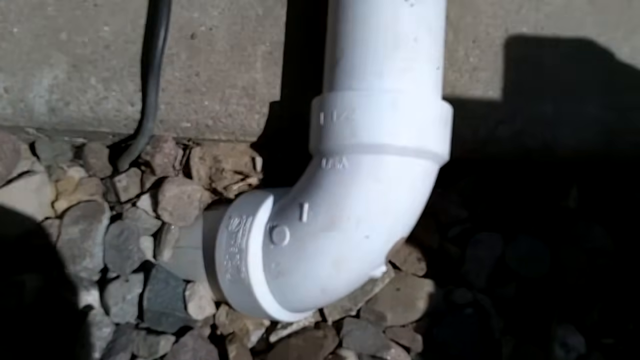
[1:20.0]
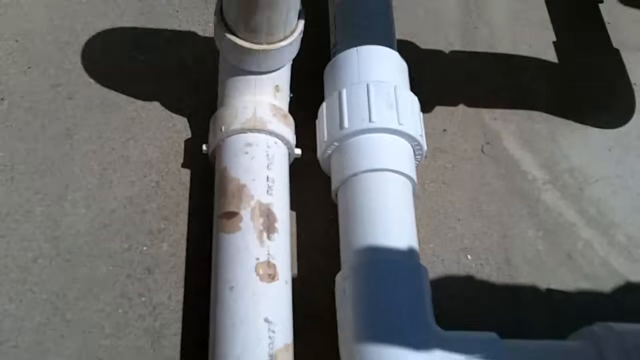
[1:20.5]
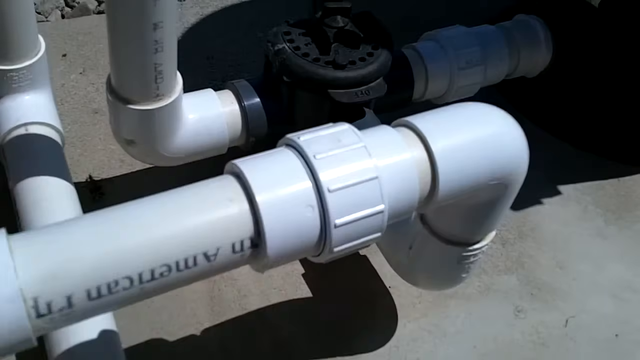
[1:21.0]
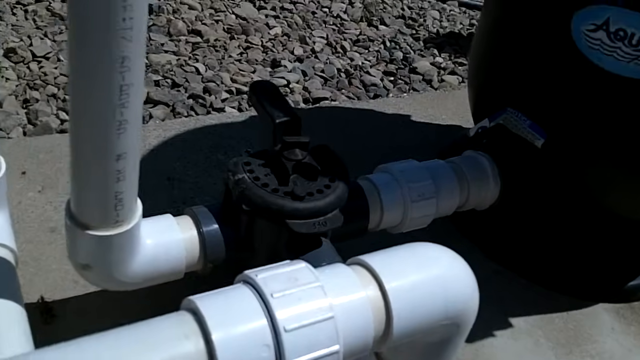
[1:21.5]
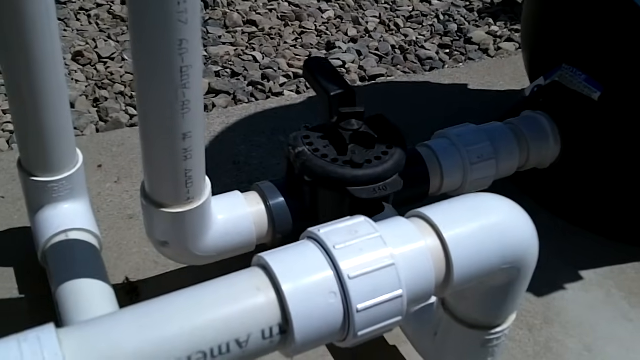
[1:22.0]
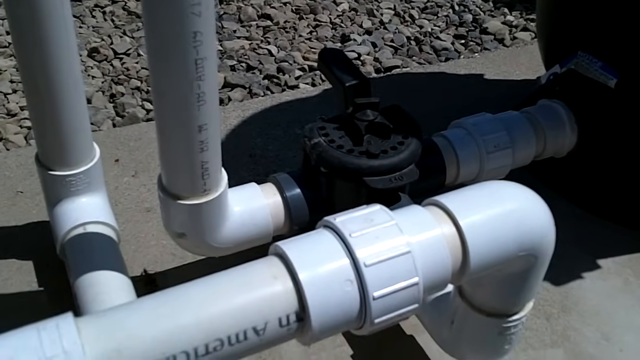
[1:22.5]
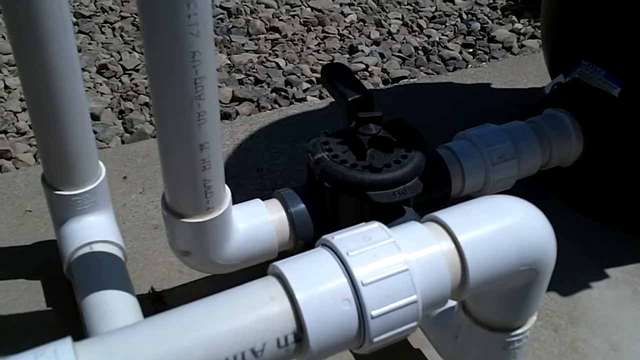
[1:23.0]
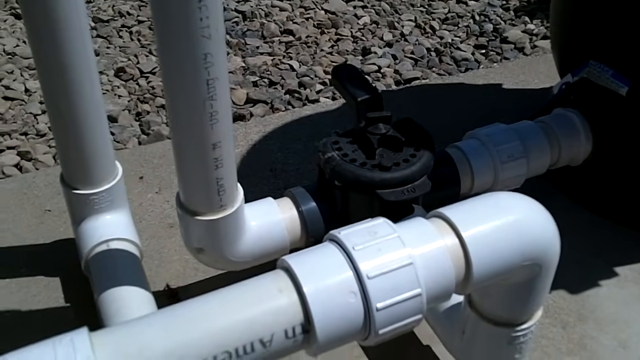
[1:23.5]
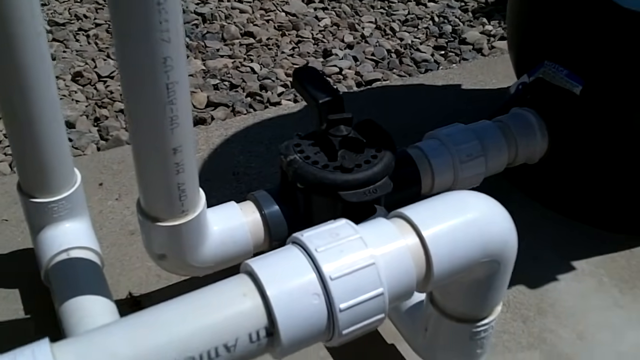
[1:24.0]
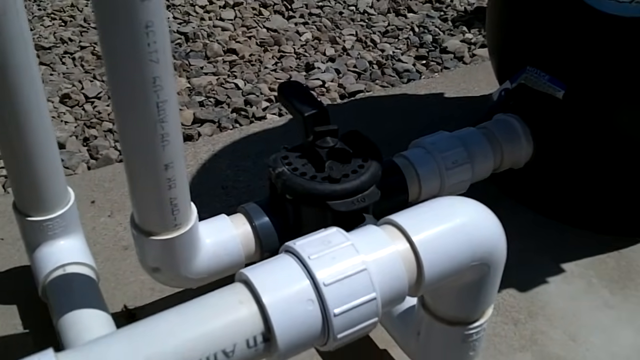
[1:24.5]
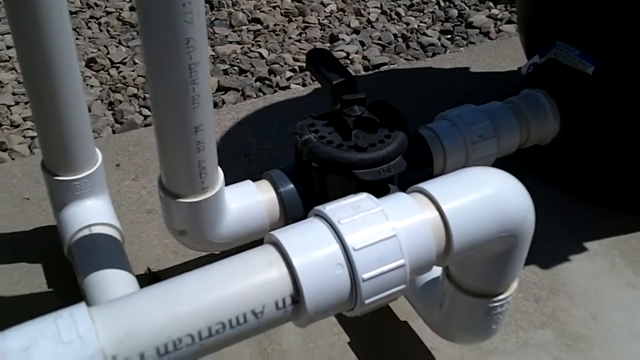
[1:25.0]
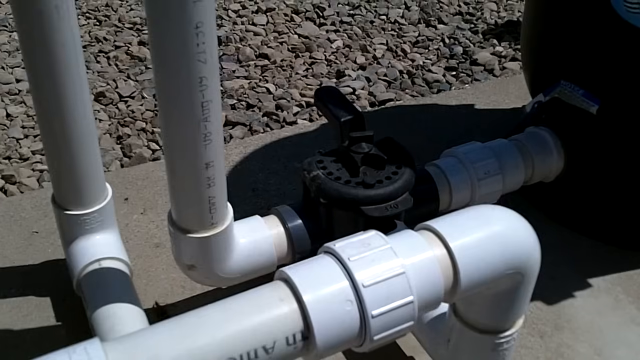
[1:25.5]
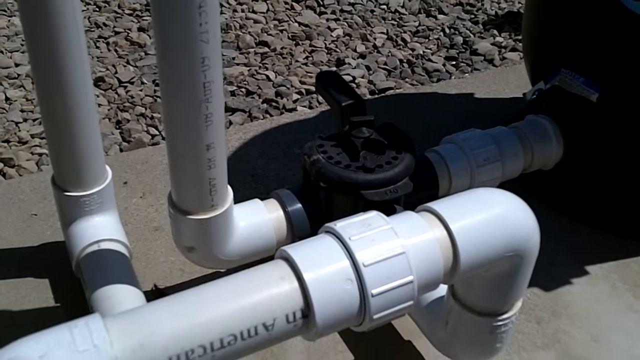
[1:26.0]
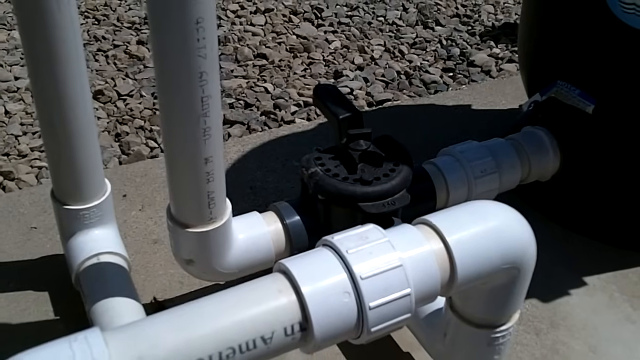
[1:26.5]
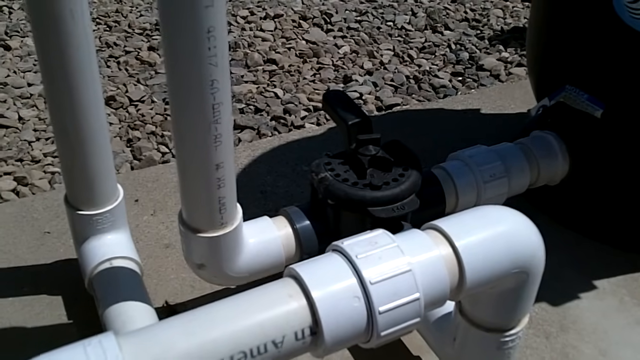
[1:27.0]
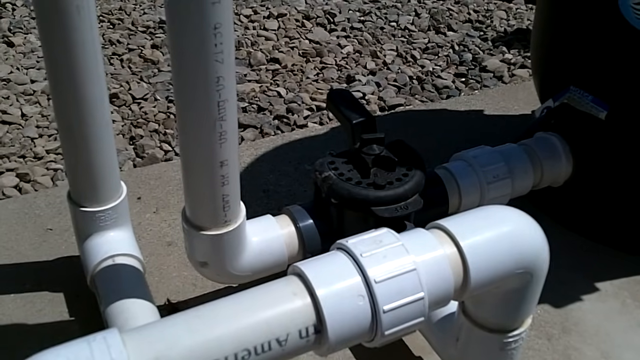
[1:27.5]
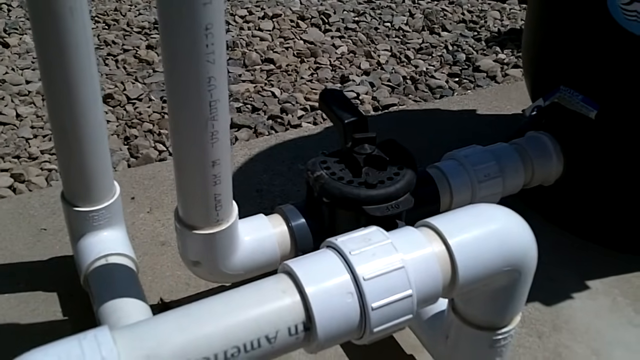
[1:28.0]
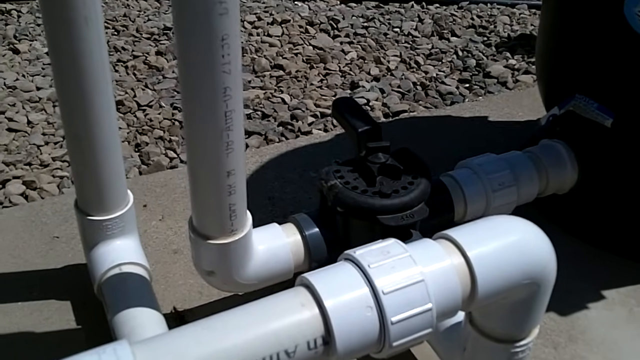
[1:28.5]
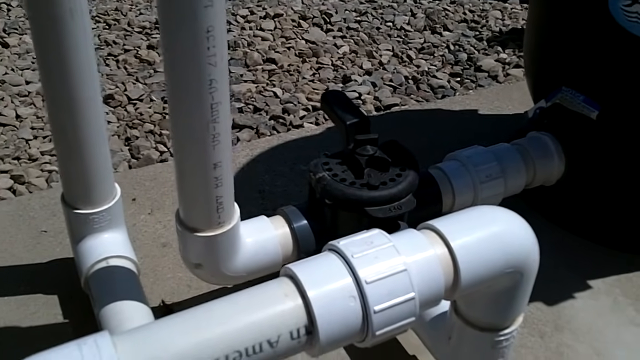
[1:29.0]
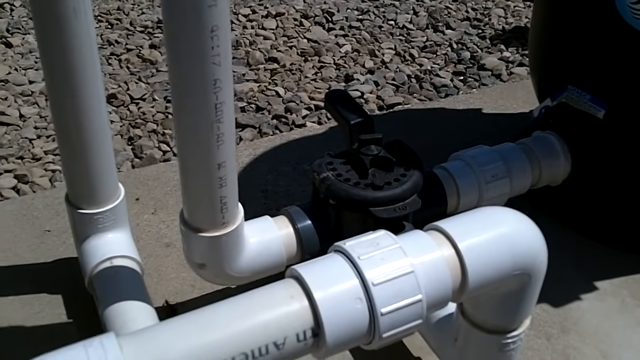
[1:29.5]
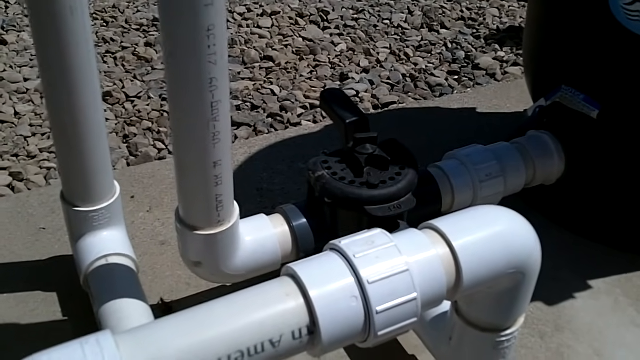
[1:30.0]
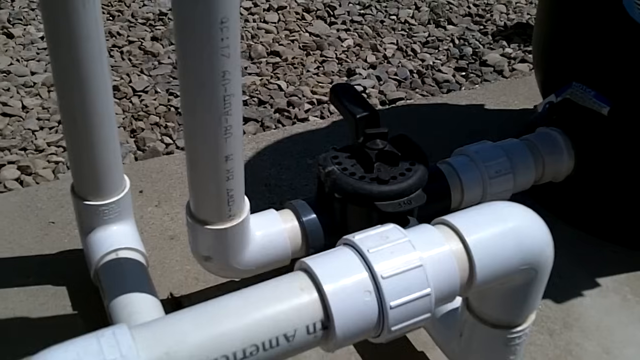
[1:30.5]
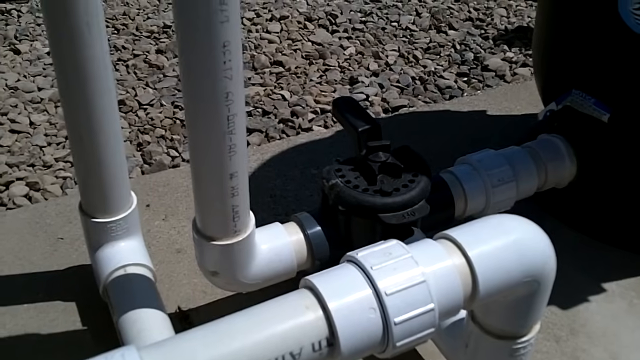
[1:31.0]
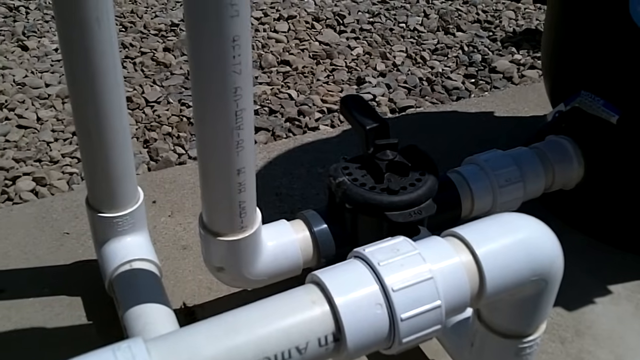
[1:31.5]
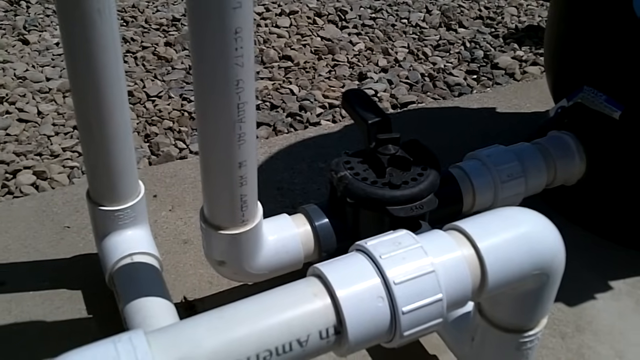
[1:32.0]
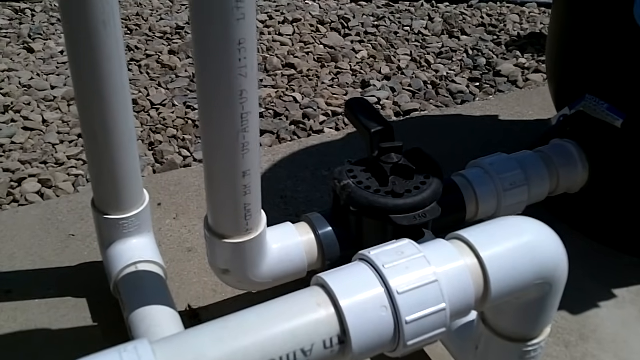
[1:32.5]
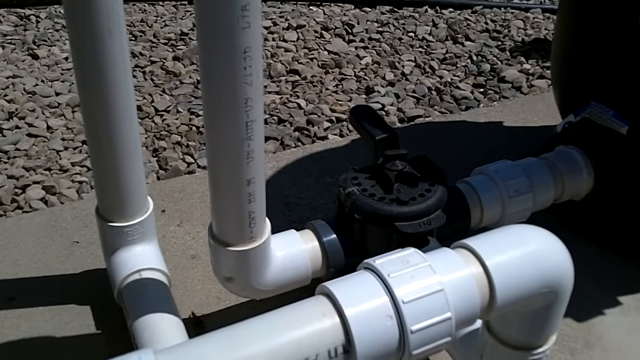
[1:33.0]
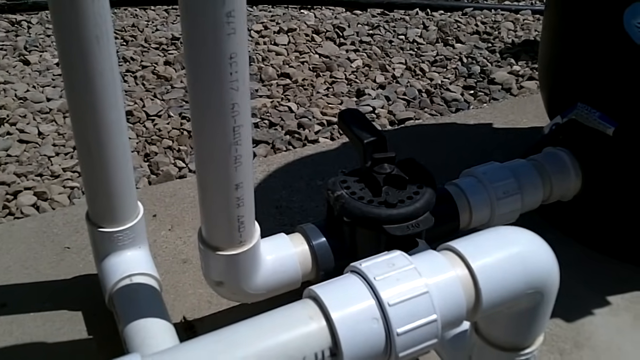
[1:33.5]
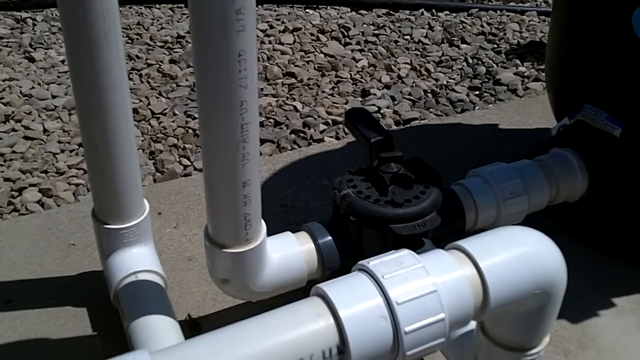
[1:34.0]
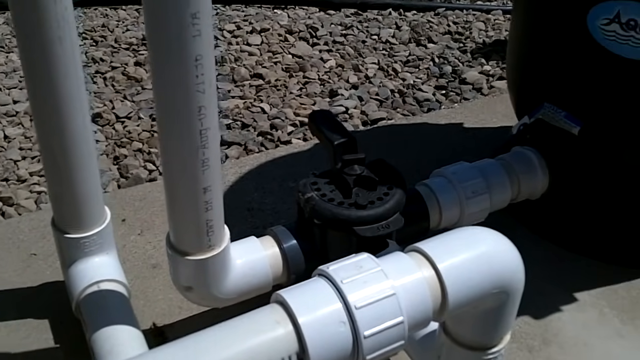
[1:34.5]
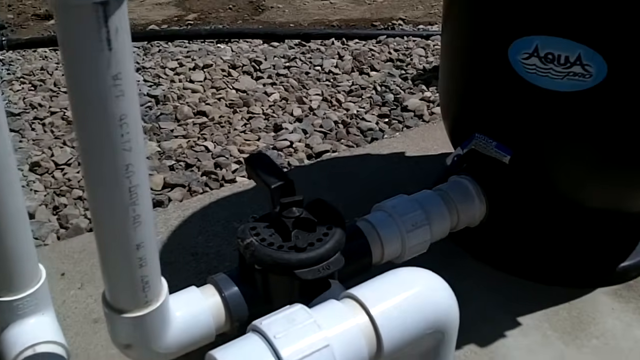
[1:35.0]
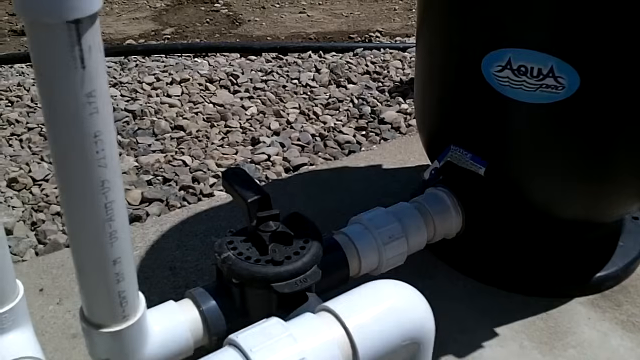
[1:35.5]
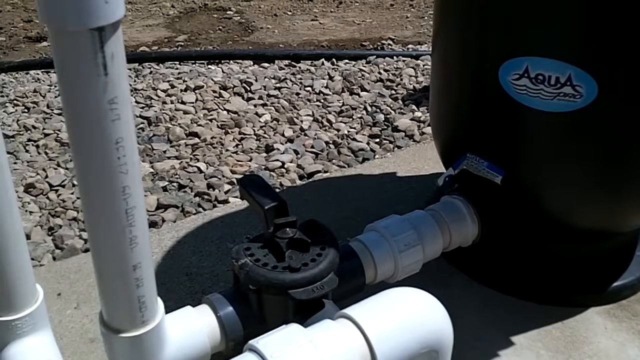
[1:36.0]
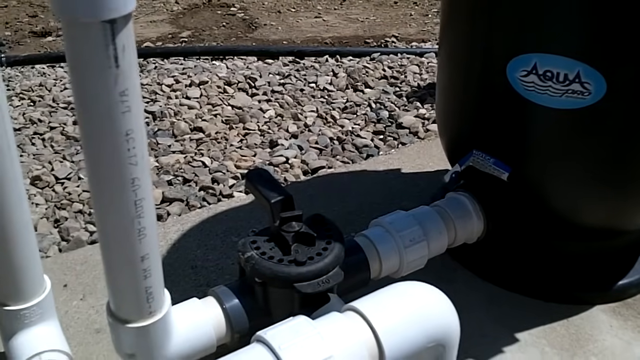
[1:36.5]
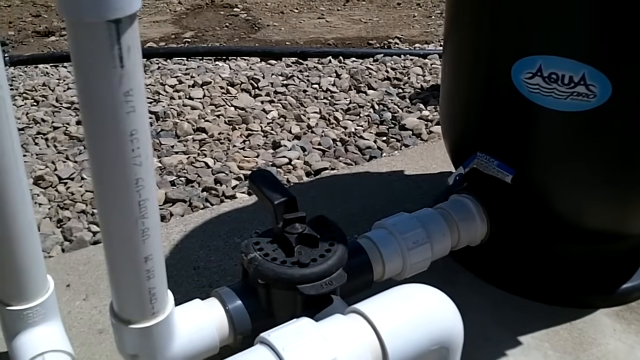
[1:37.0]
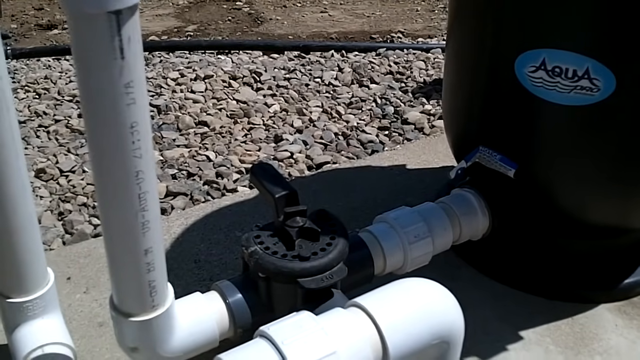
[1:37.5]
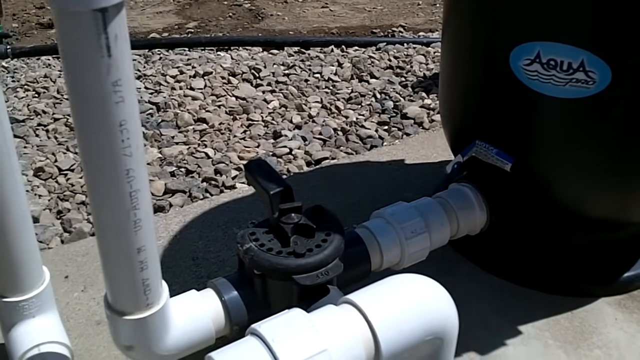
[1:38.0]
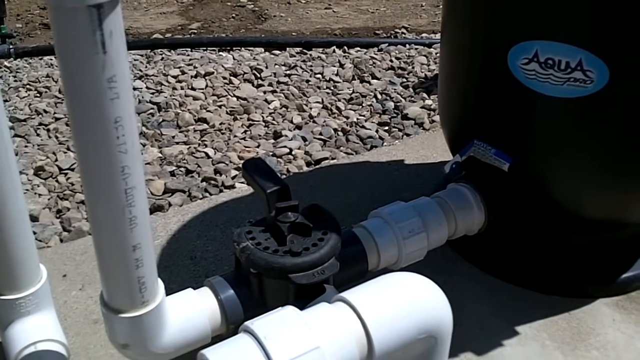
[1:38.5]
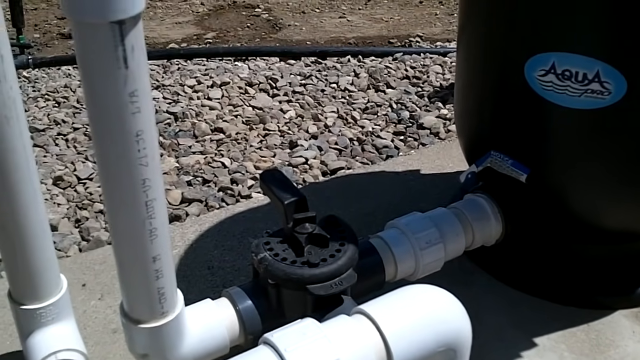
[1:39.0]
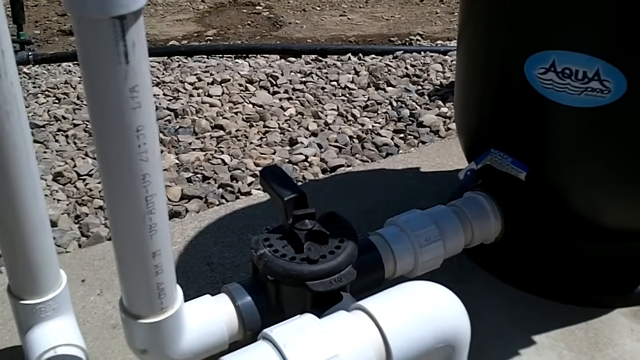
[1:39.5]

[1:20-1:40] More views show the white tubing and the black lever. Some of the tubing has upside-down writing that is hard to read, and there is also writing in a vertical orientation. The logo on the black cylinder says "Aqua" in dark blue, with something almost like squiggly water underneath, and apparently another word that is hard to make out in the bottom right of the logo. The cement, a lot of rocks on the ground in the background, and more white tubing are visible. The focus seems to be on the larger cylinder from a different vantage point. The lever here is the same type as the one seen earlier, placed in a different location.